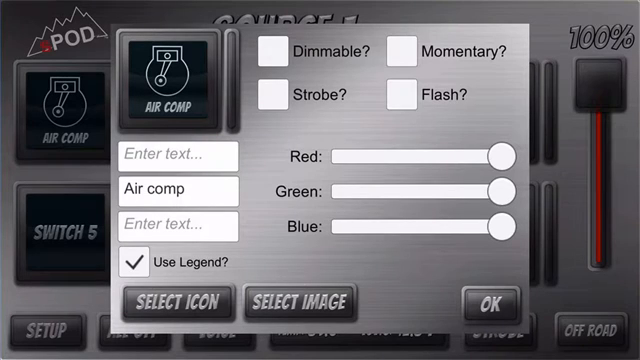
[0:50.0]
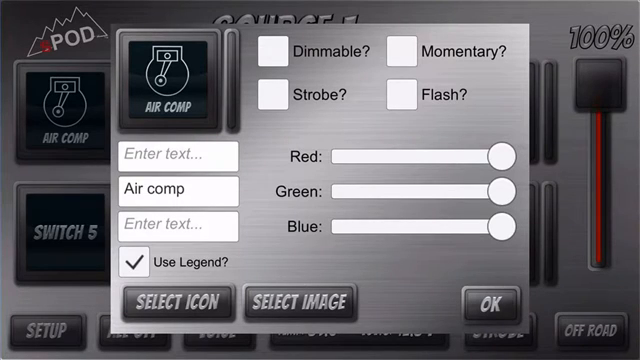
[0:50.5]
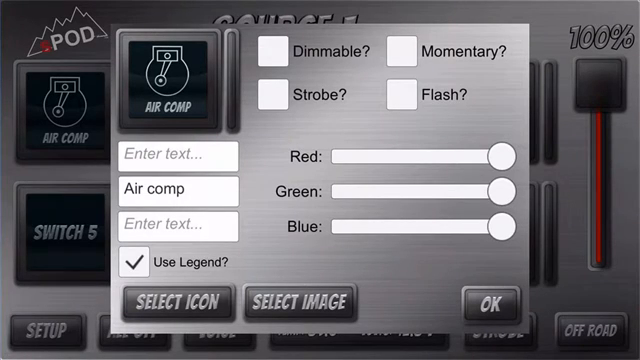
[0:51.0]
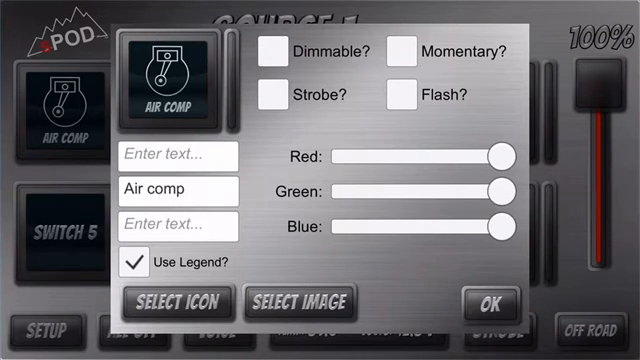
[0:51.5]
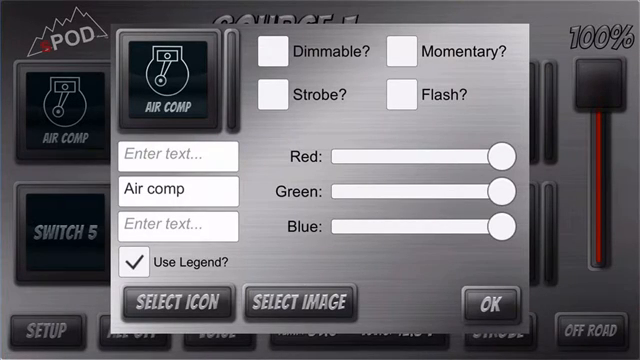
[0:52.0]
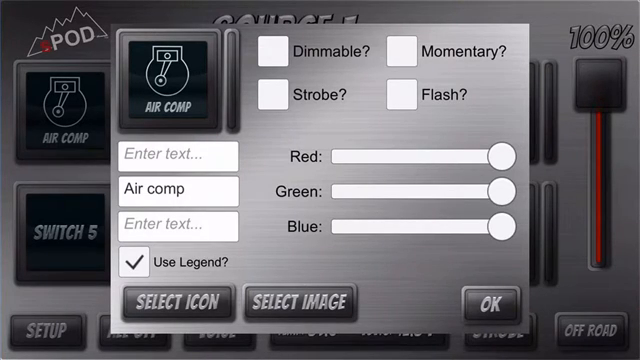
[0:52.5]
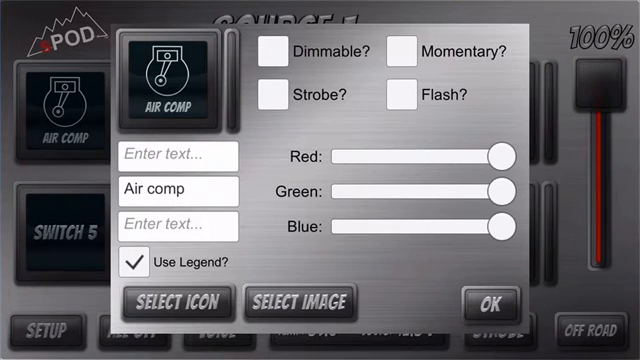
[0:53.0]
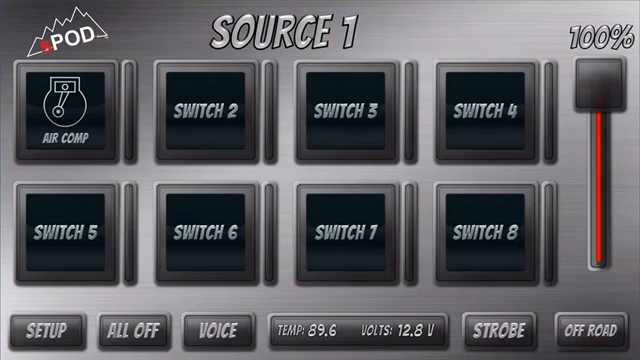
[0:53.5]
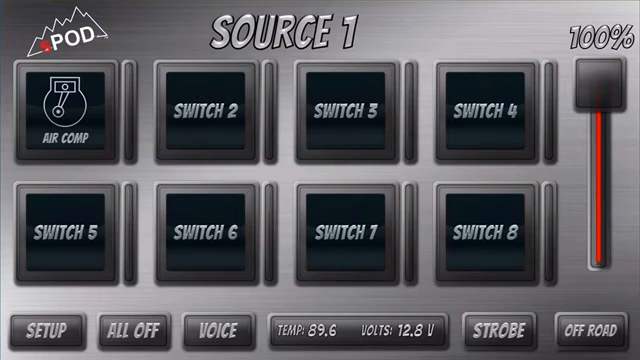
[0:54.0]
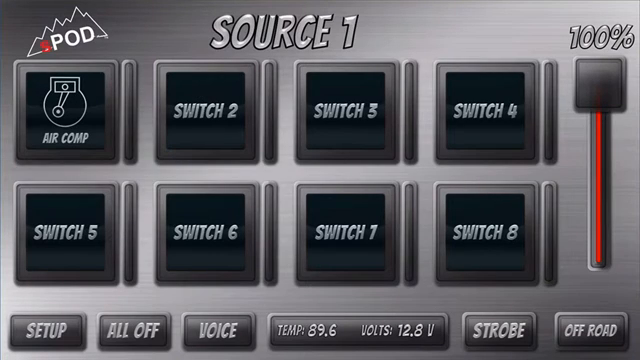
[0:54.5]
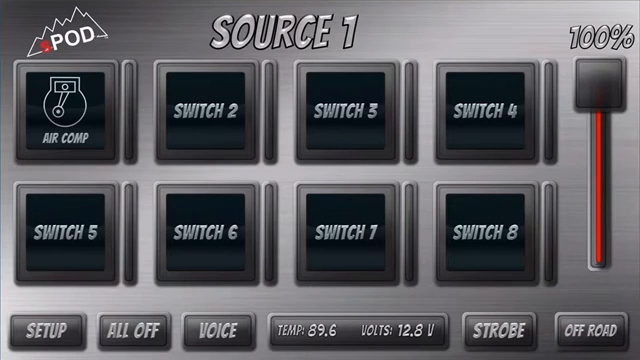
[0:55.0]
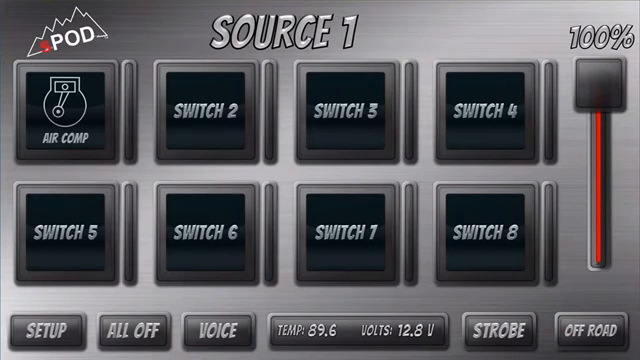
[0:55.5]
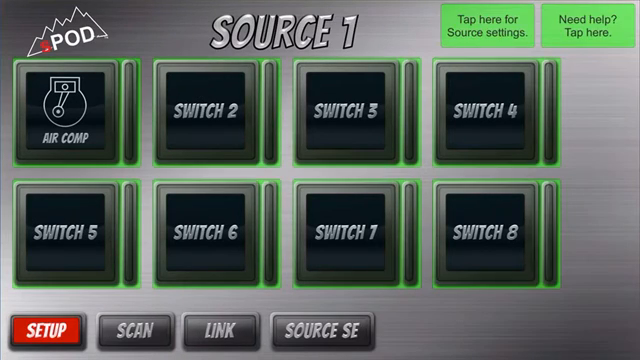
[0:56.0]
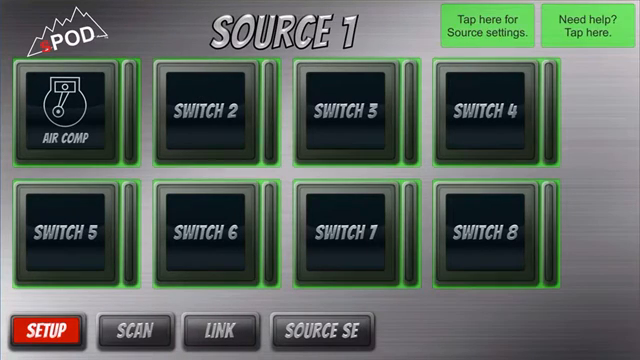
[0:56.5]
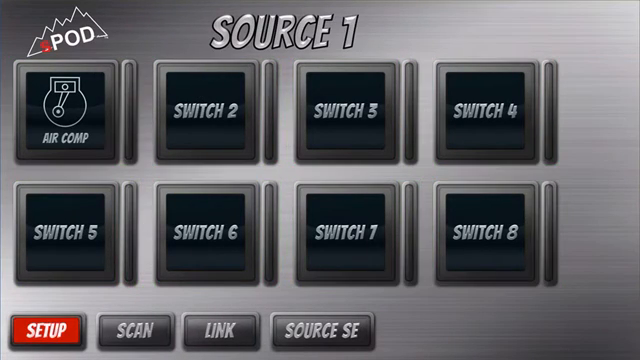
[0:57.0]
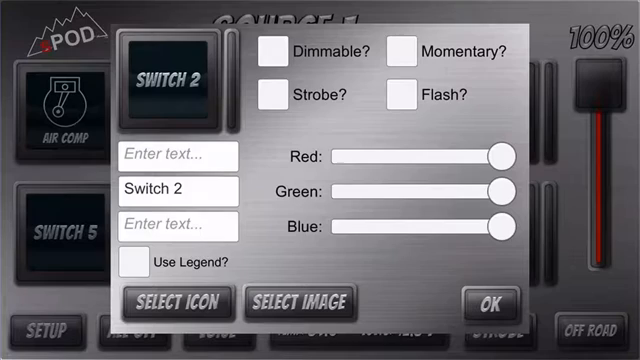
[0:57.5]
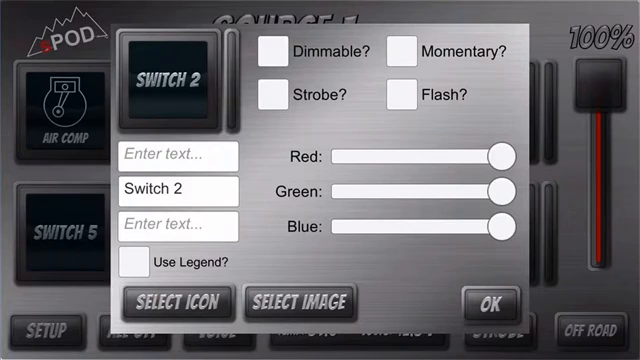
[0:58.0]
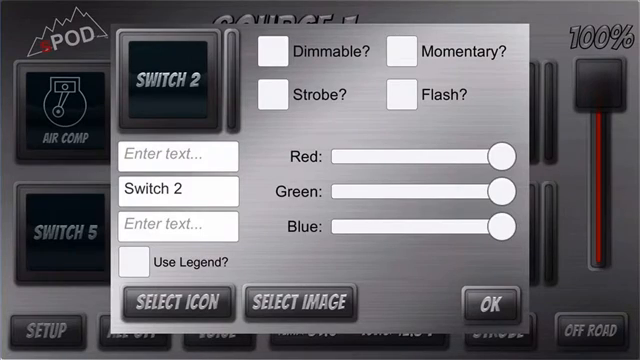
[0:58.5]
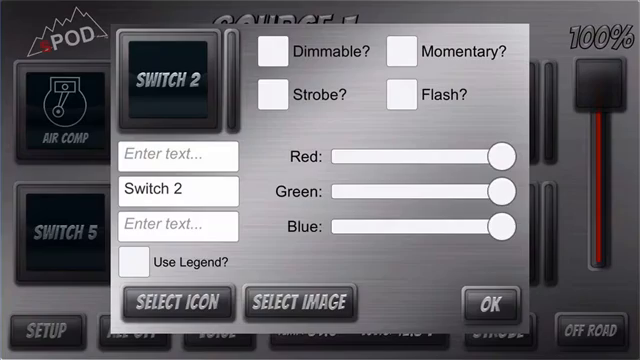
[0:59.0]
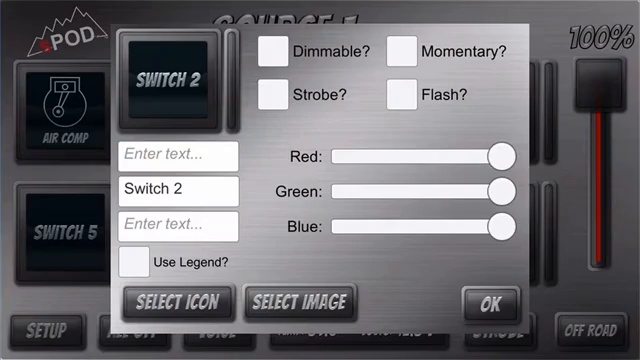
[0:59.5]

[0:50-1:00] After changing the icon and the name, the user saves it as his primary source and goes to switch2 to do the same thing, apparently changing it to a similar device name or possibly something else entirely. The view moves from the AirComp source for switch1 to the tab for switch2. All of the switches contain the same set of settings and the same setup.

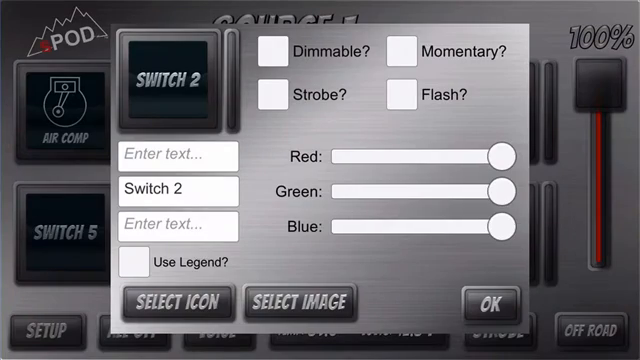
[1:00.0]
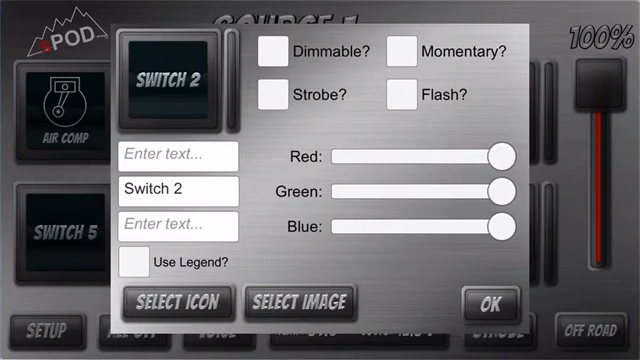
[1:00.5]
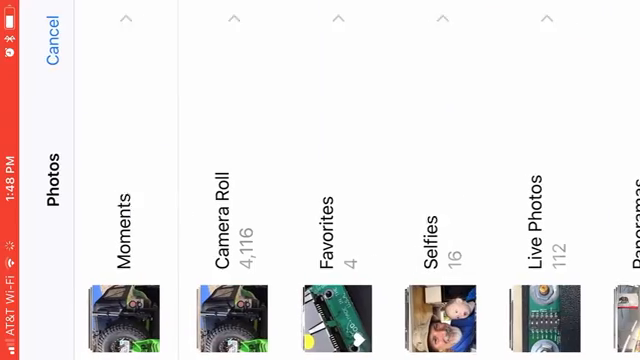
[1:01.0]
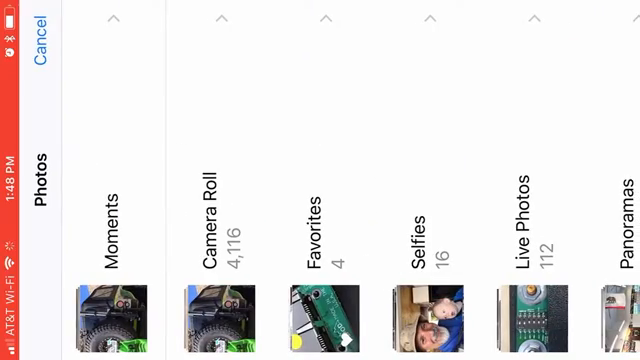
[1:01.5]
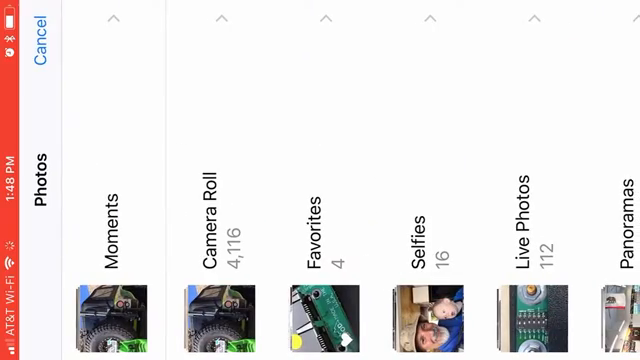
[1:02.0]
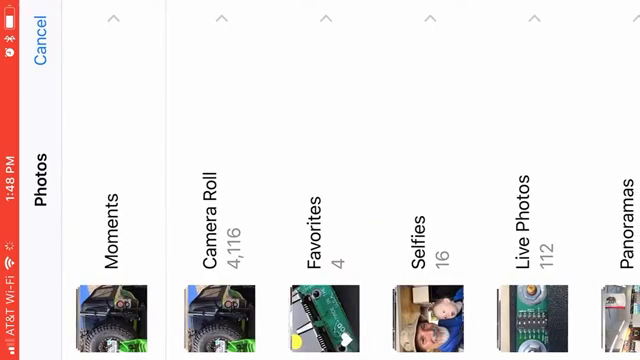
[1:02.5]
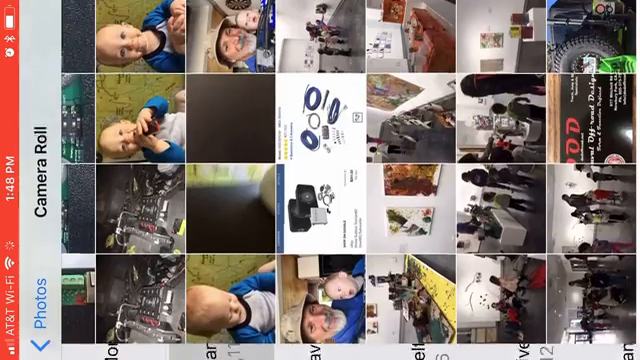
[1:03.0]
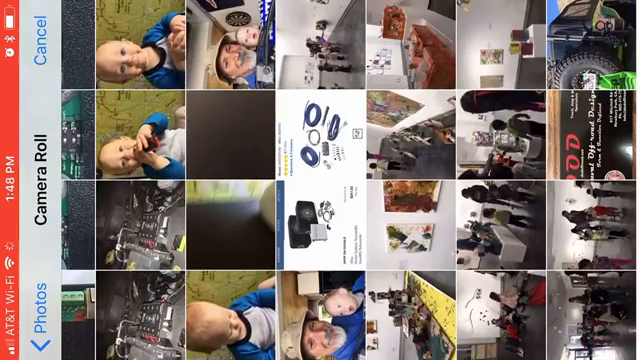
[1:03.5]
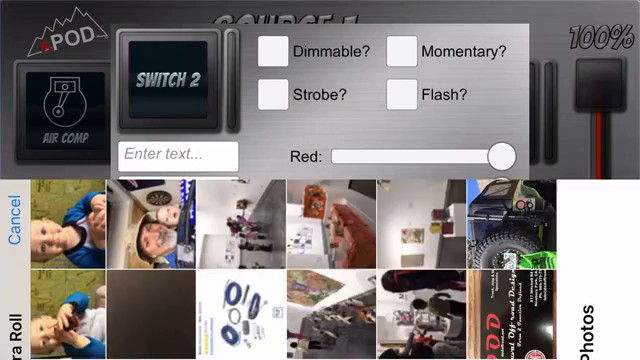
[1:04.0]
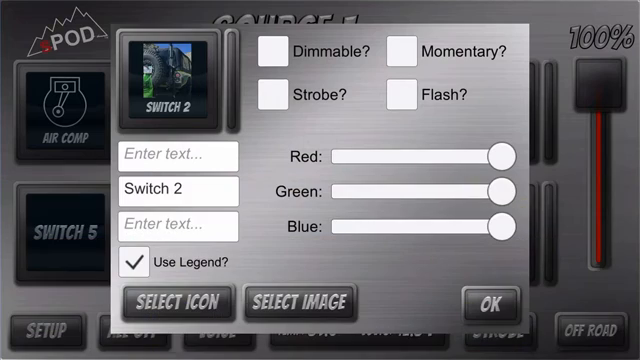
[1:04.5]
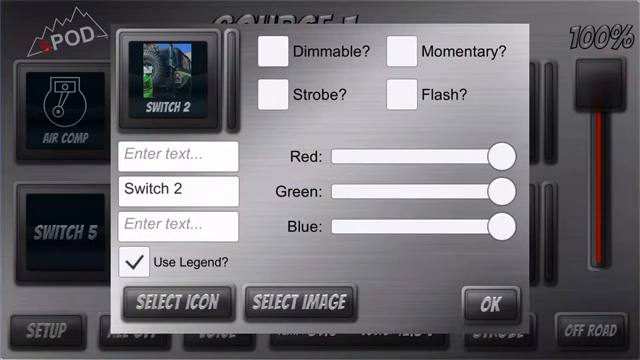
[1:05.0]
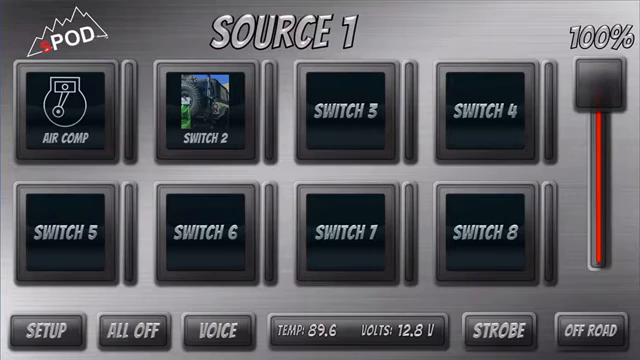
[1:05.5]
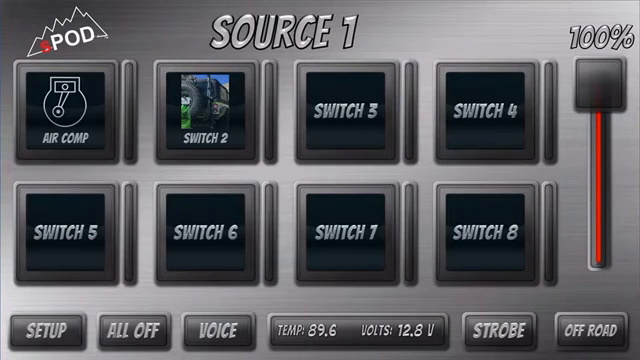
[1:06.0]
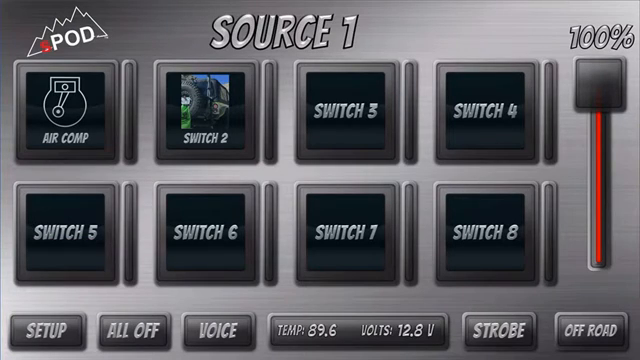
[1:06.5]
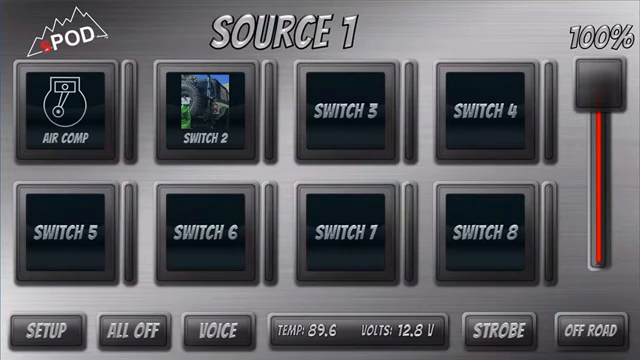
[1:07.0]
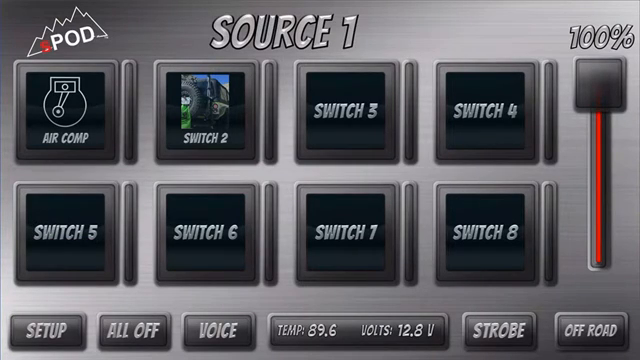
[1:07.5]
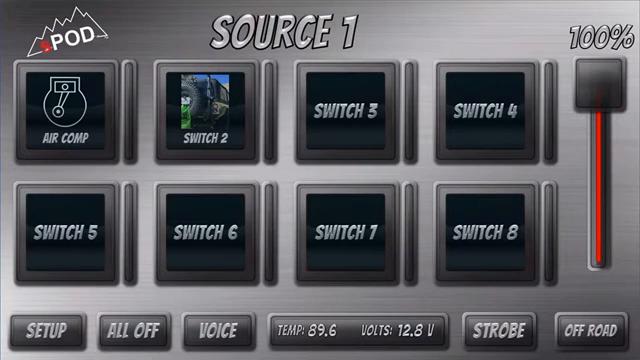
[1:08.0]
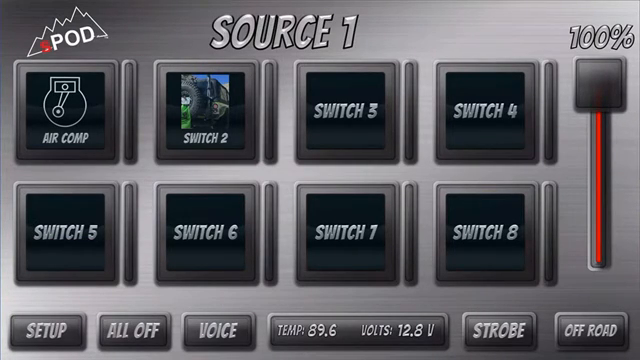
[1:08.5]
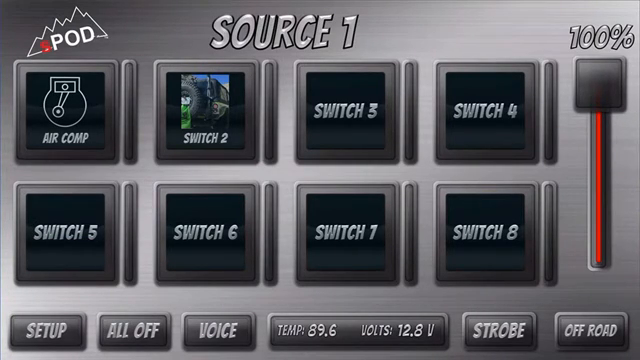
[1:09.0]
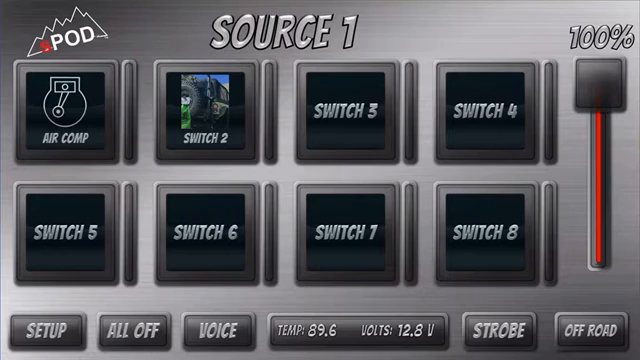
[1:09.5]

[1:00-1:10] The user opens a photo app and picks a picture from his gallery as the icon, then saves it so that switch 2 now has an entirely different picture, apparently the back of a Jeep or some sort of 4x4 vehicle. A screen shows the list of other pictures he could select from.